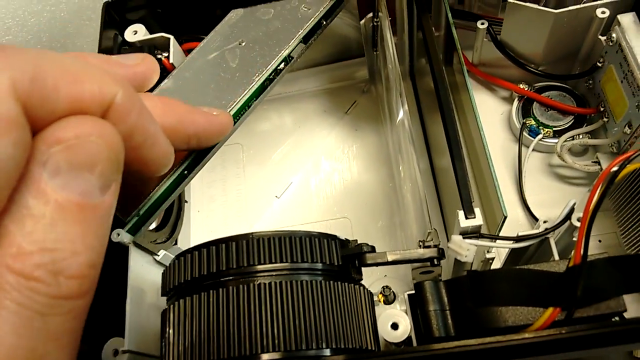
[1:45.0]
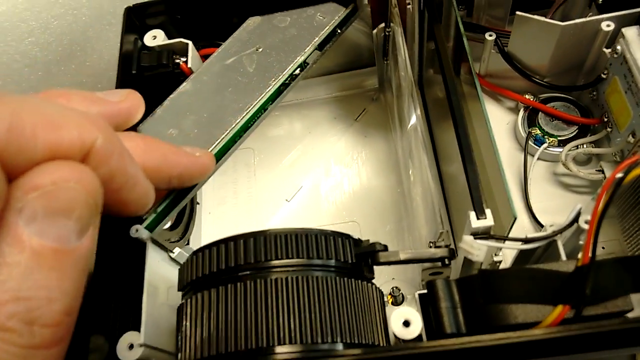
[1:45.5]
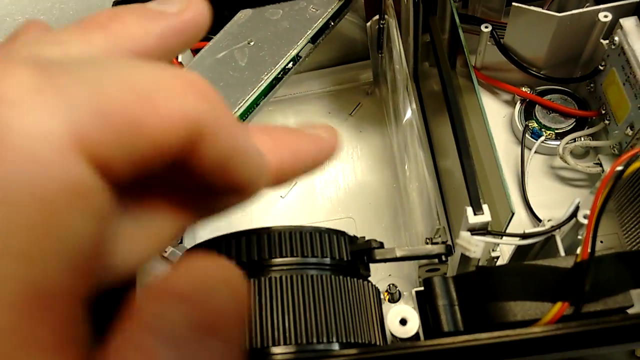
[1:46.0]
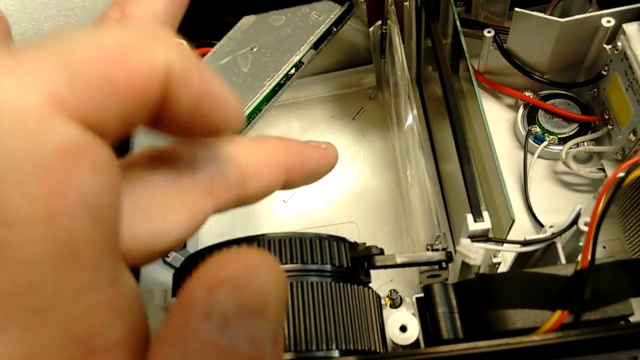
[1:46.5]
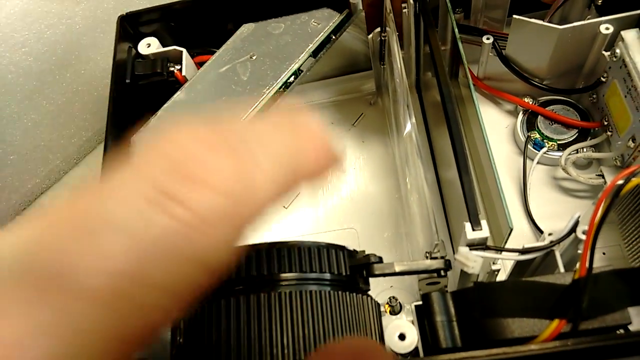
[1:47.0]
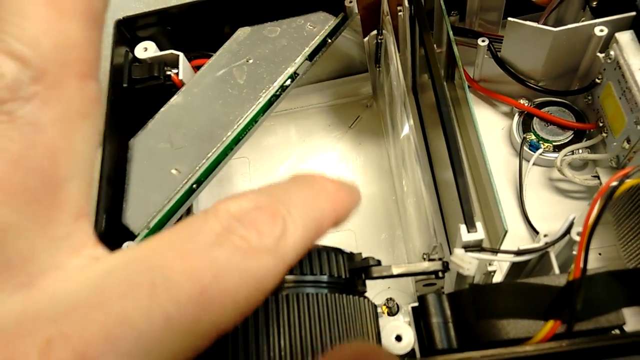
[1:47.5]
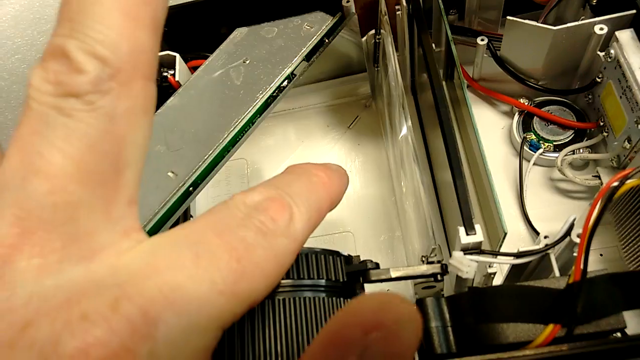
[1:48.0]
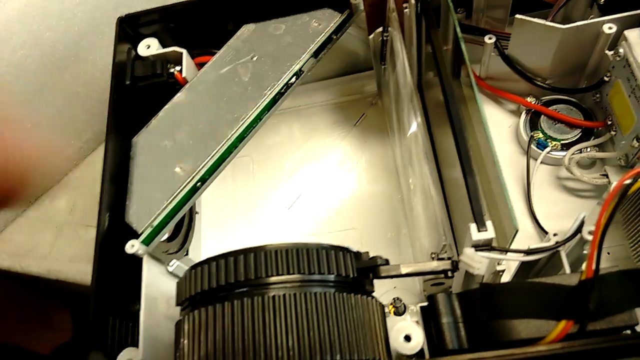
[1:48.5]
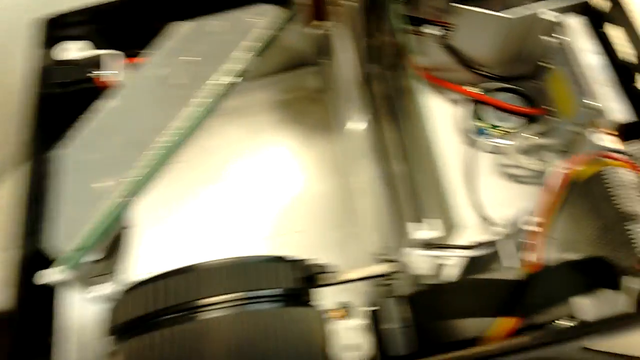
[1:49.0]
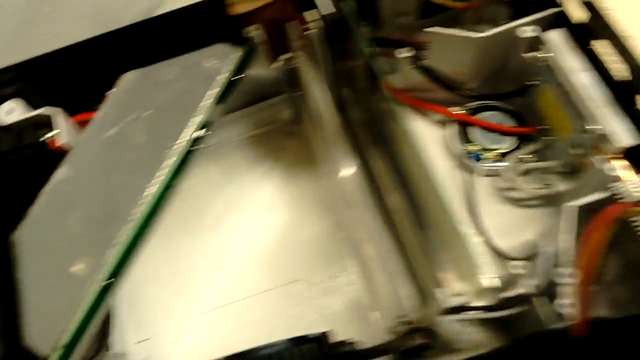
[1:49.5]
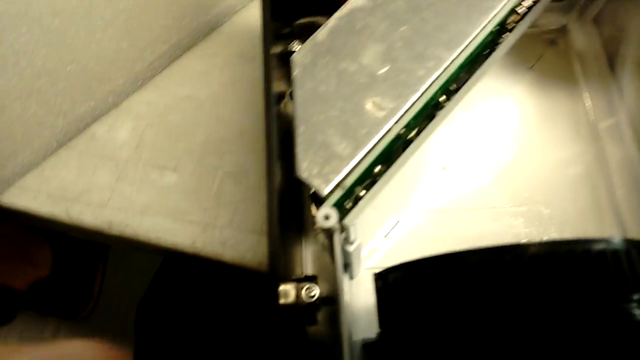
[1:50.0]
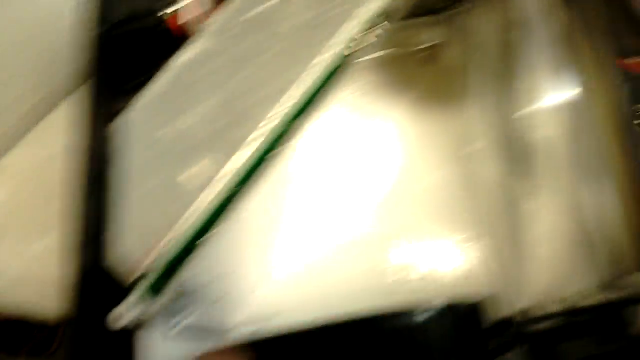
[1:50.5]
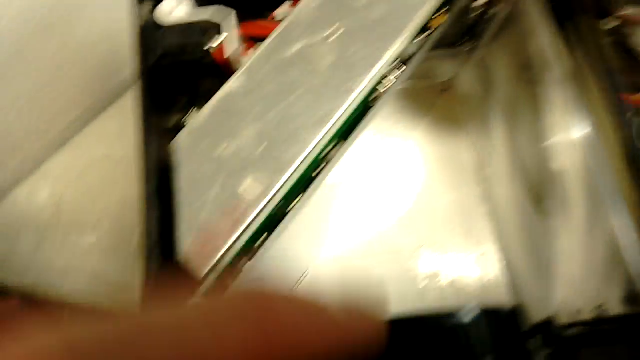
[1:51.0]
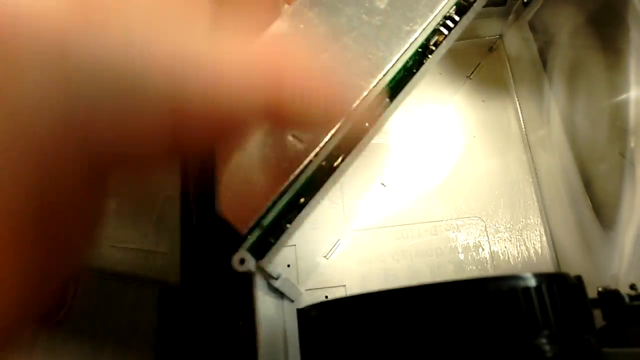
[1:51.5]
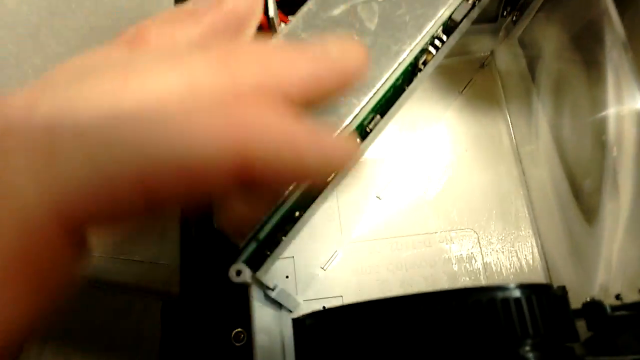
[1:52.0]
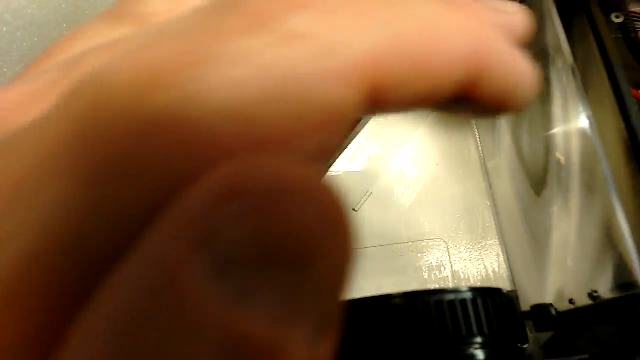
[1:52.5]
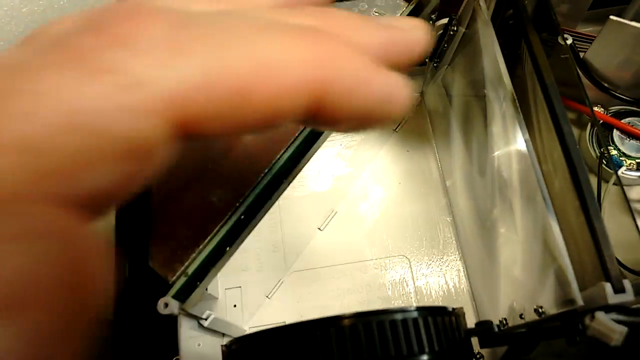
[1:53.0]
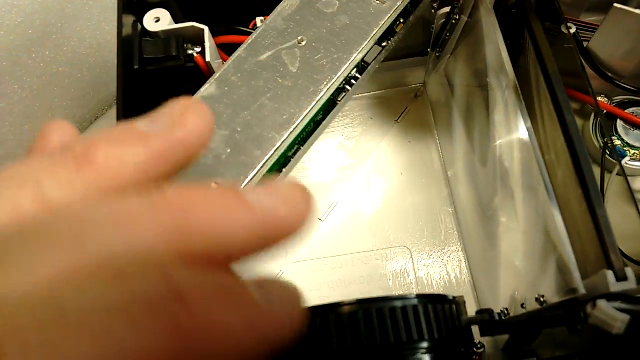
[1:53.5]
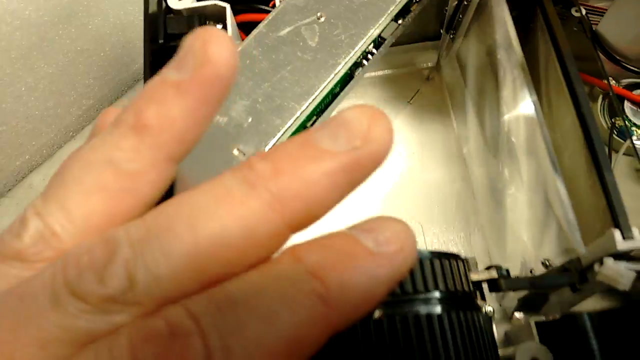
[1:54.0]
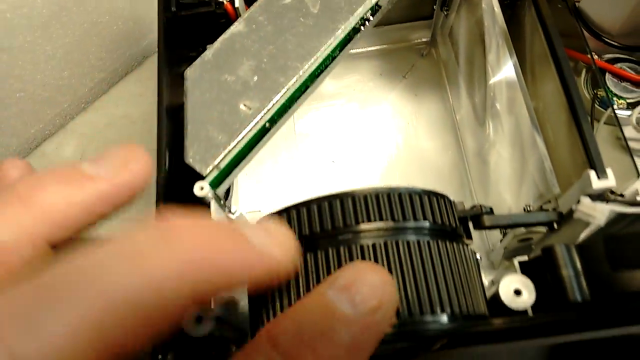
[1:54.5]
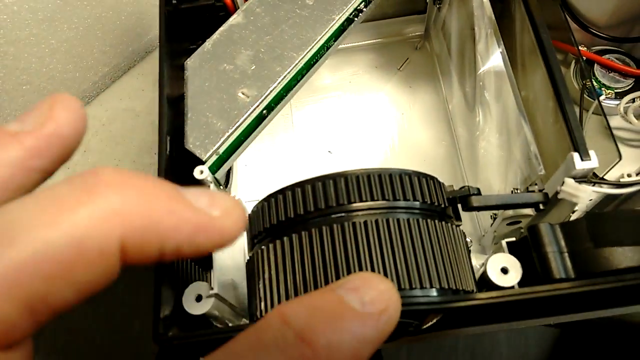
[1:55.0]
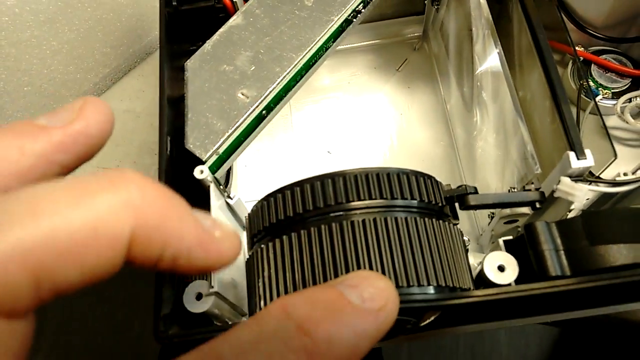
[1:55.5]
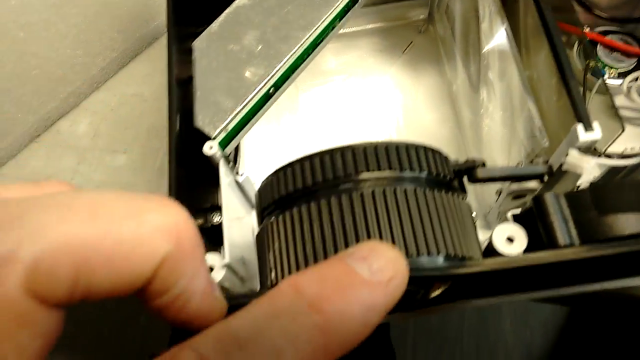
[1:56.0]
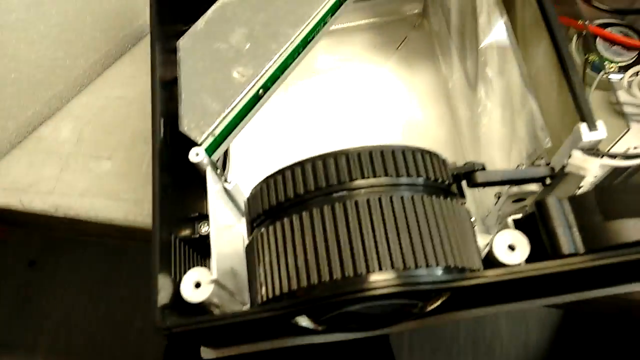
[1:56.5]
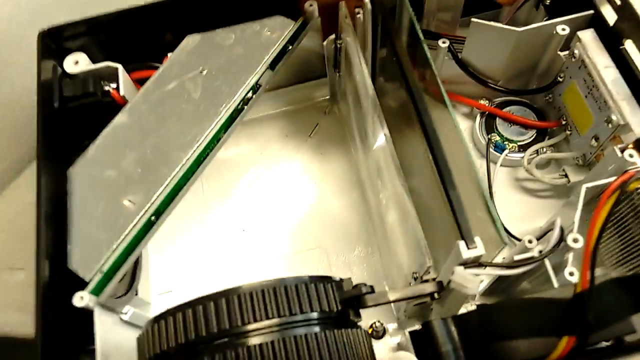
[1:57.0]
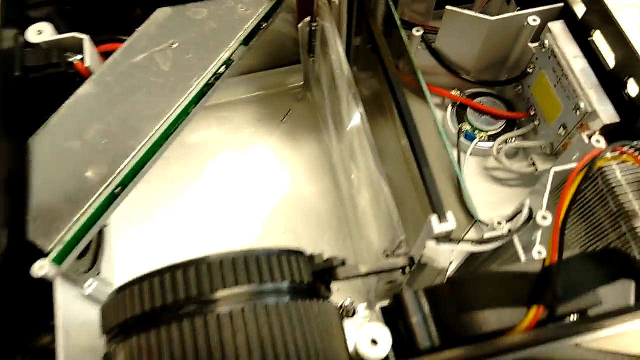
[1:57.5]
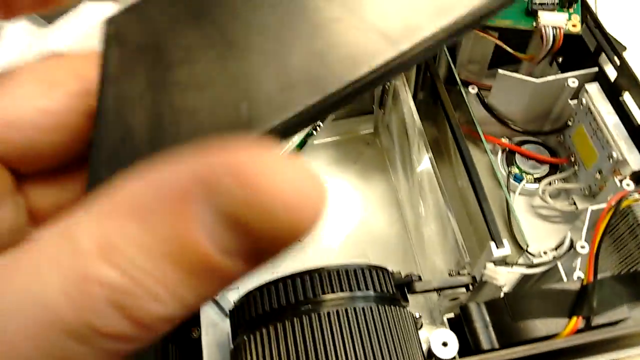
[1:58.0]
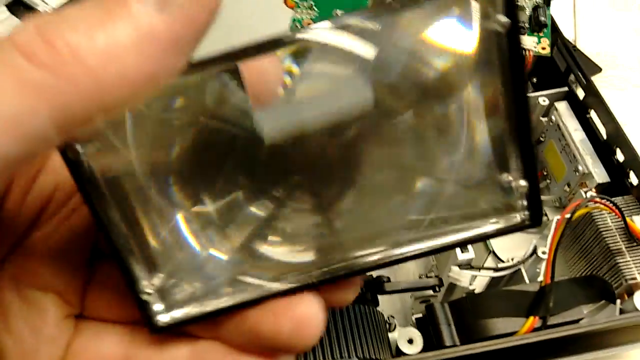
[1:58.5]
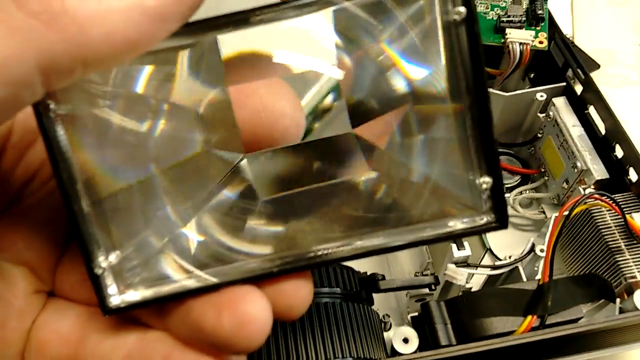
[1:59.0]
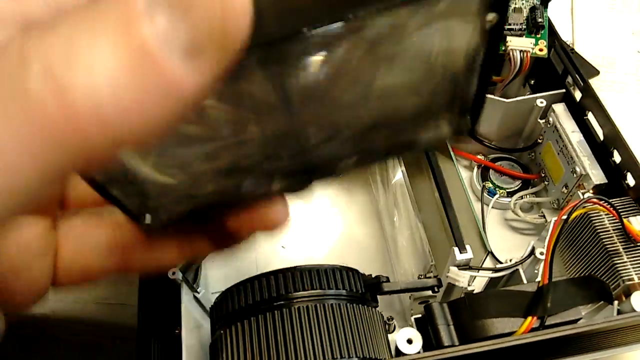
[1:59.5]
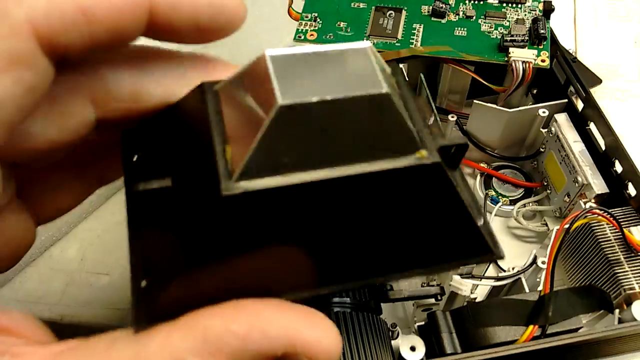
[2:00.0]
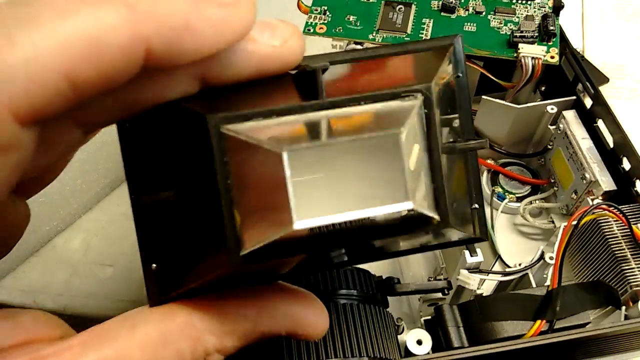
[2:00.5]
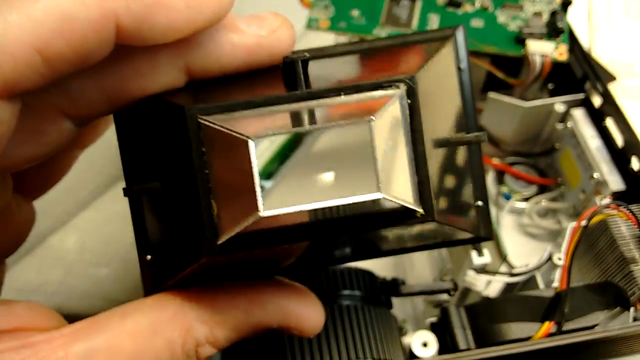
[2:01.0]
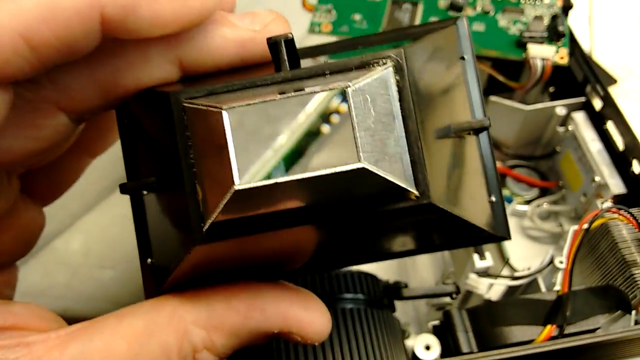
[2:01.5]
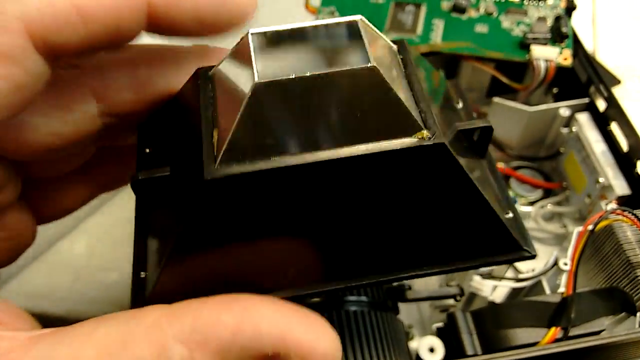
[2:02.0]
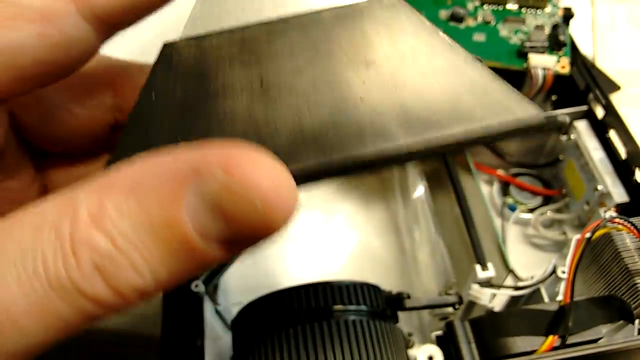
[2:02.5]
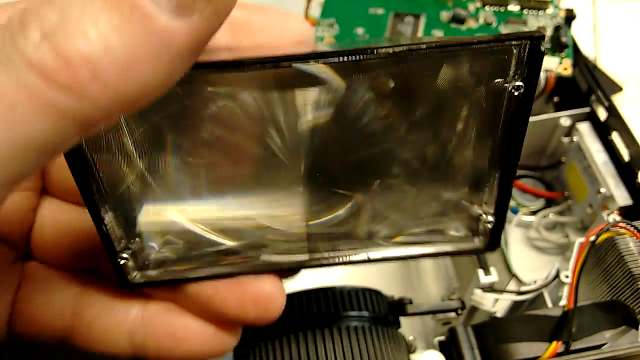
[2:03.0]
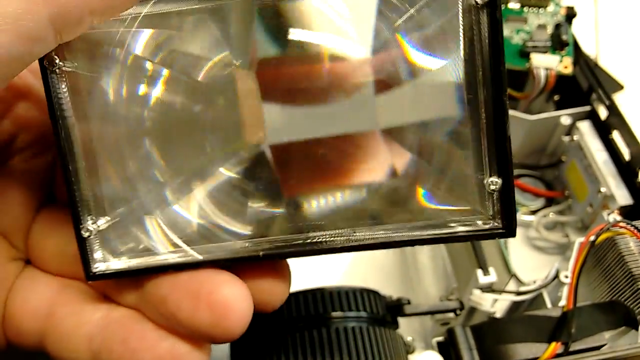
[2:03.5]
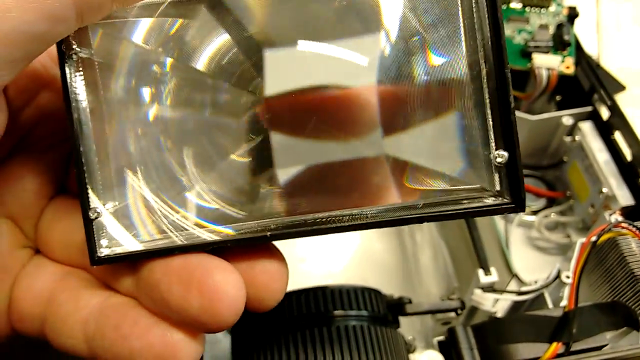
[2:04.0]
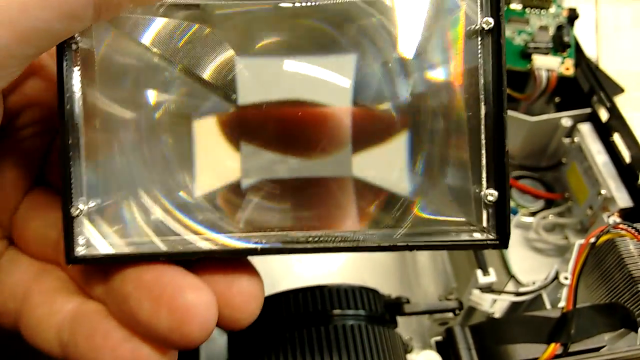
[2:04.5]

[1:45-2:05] The hand of a white Caucasian male focuses on the front left and back left of the machine. He has pulled out what looks like a triangular mirror or lens that goes inside the machine, and shows its front and back to the camera. It is black around a mirror and has some sort of lens or scope inside that looks like a diamond. The focus is on the left-hand side and the front, where the actual lens is.